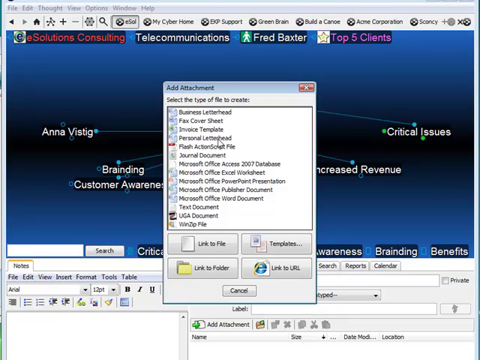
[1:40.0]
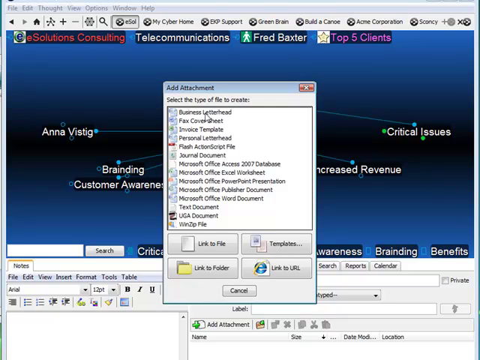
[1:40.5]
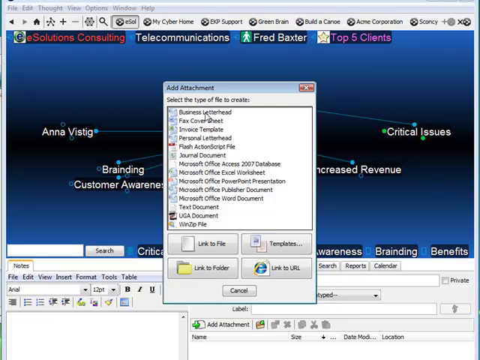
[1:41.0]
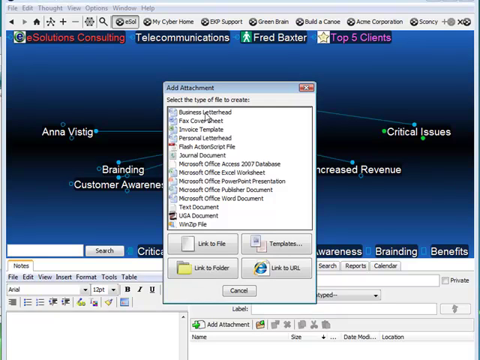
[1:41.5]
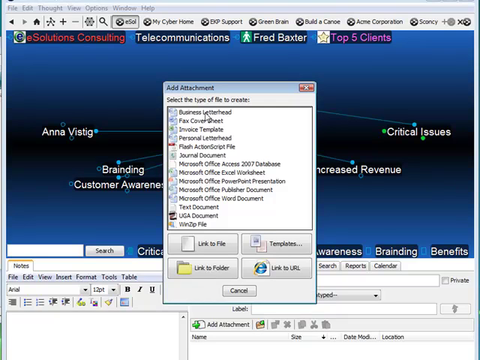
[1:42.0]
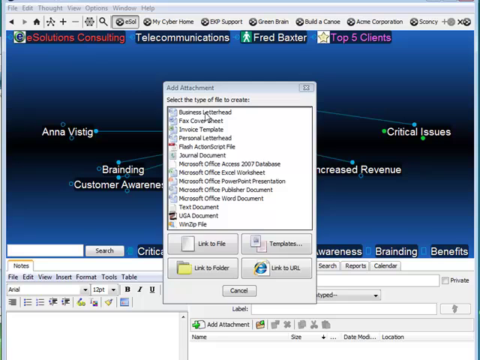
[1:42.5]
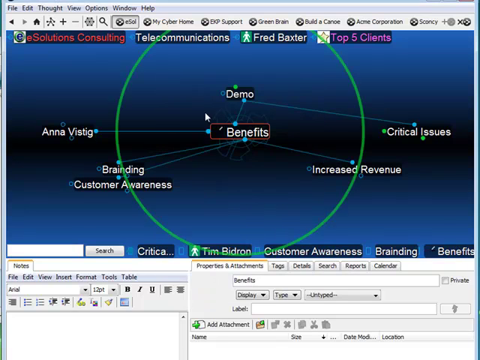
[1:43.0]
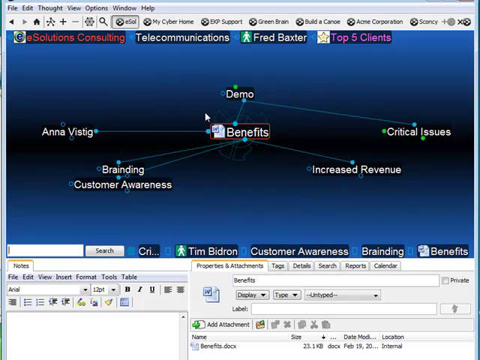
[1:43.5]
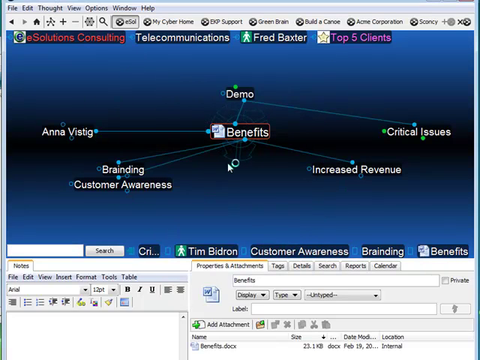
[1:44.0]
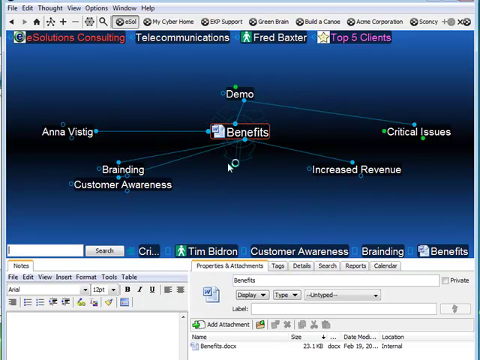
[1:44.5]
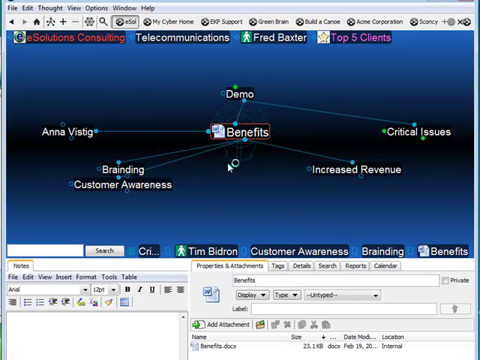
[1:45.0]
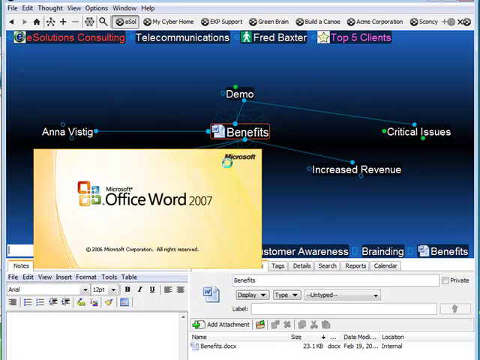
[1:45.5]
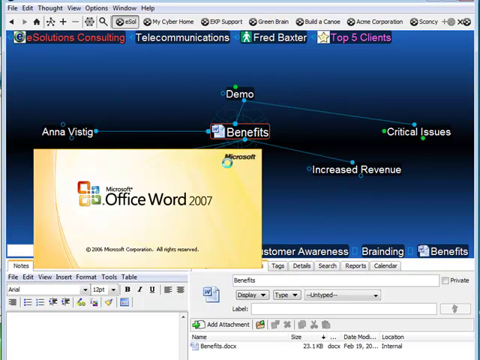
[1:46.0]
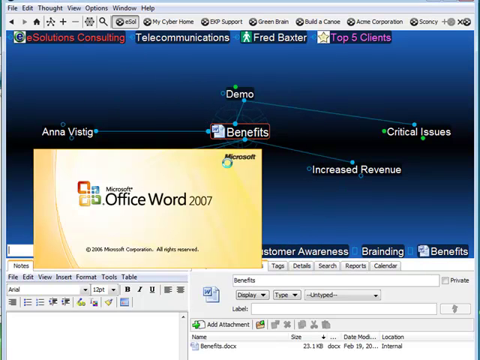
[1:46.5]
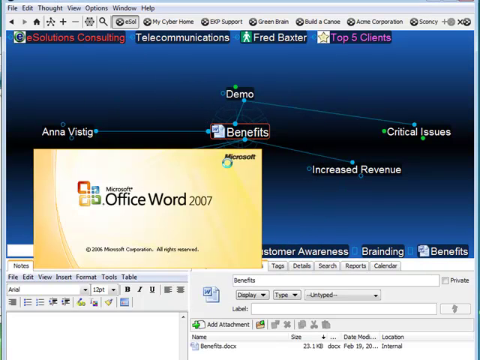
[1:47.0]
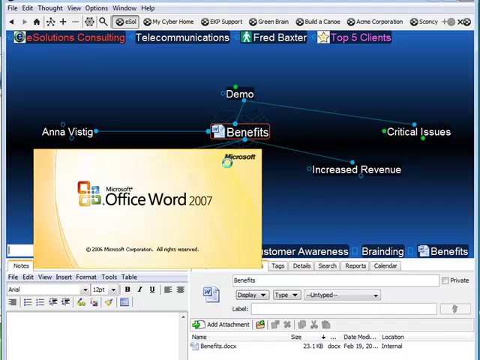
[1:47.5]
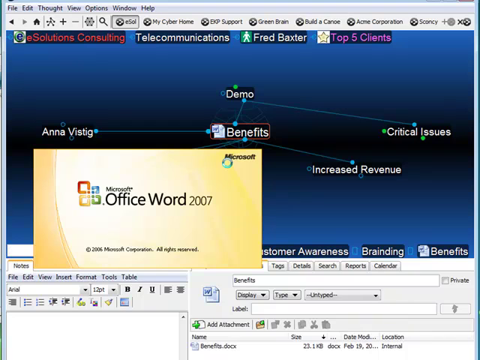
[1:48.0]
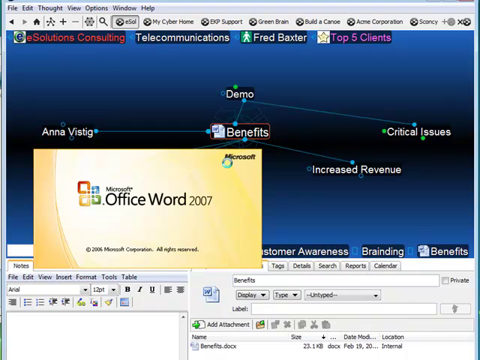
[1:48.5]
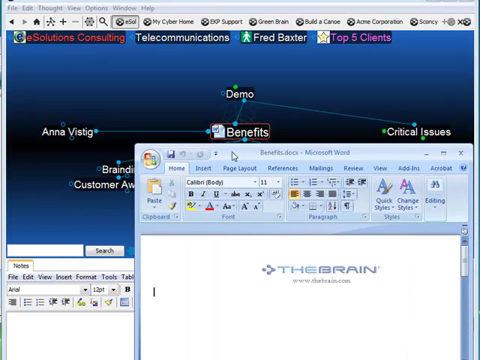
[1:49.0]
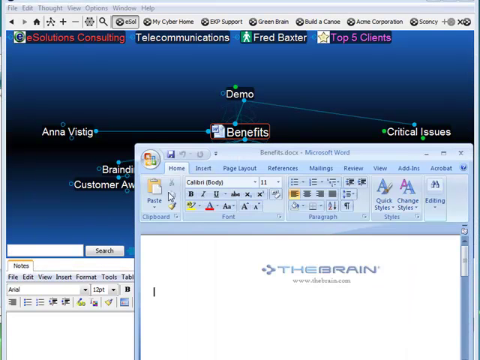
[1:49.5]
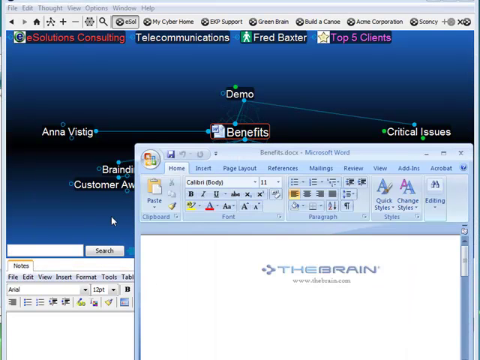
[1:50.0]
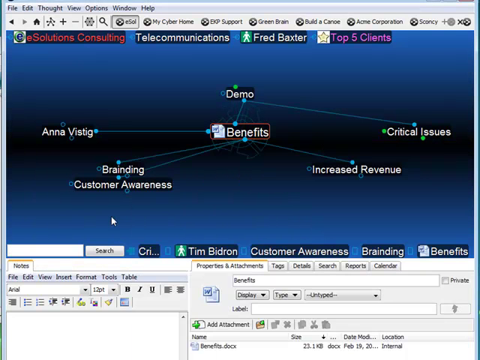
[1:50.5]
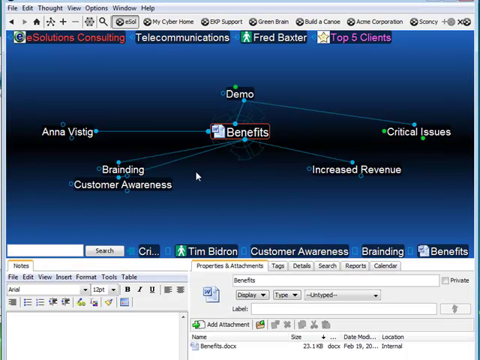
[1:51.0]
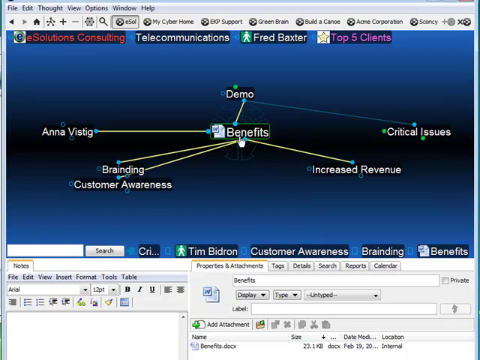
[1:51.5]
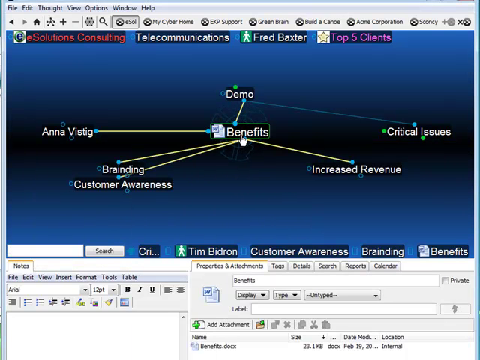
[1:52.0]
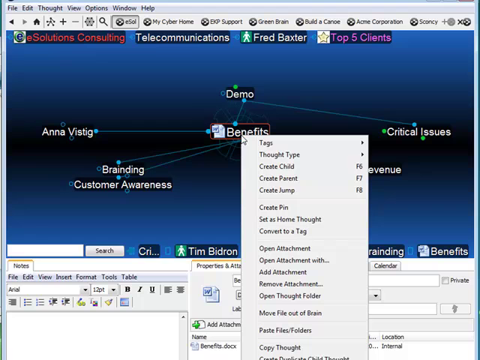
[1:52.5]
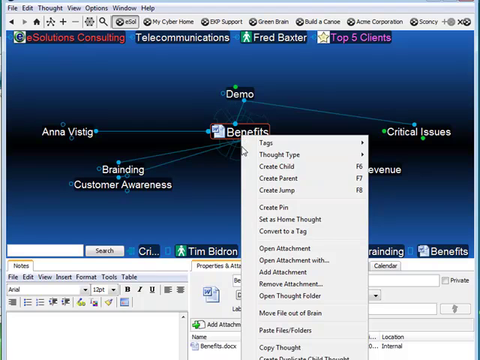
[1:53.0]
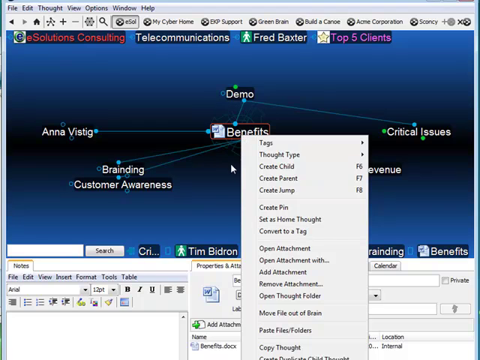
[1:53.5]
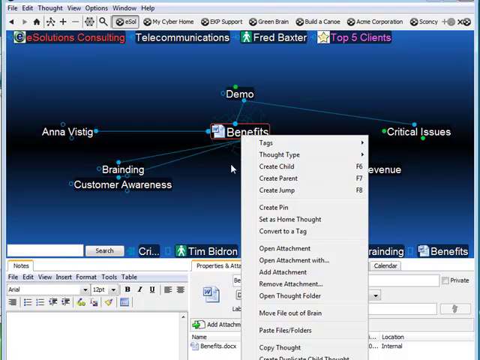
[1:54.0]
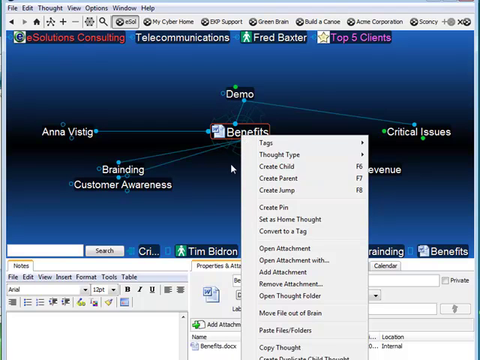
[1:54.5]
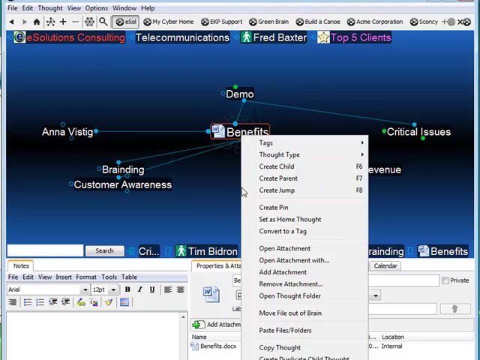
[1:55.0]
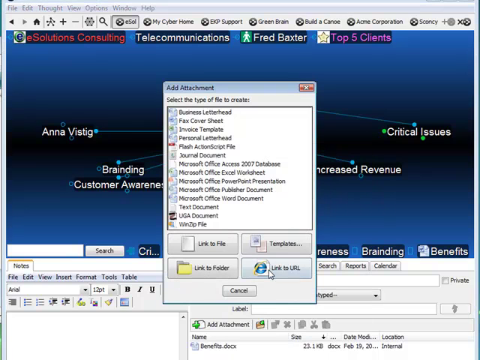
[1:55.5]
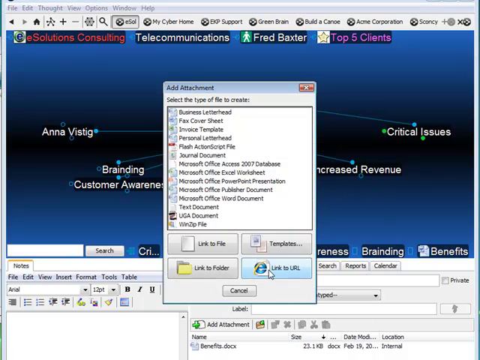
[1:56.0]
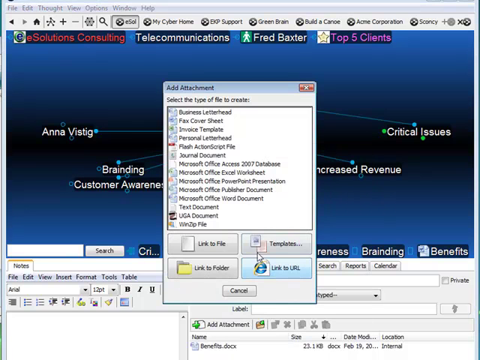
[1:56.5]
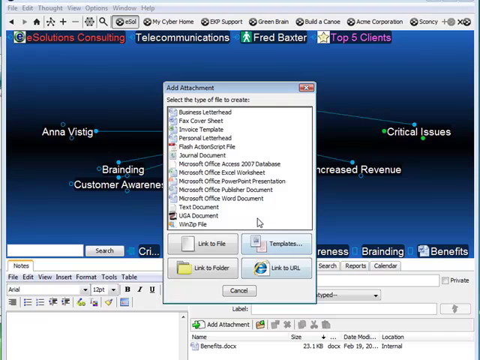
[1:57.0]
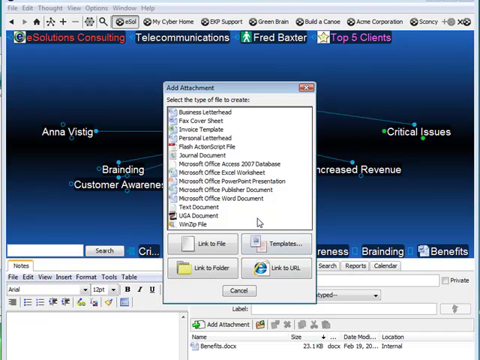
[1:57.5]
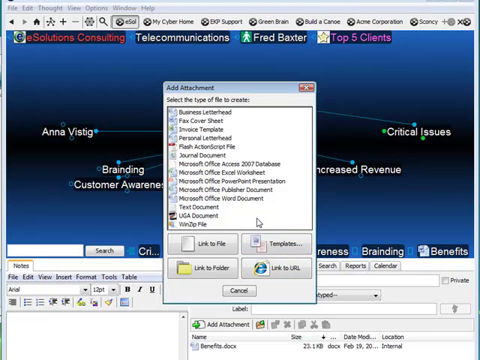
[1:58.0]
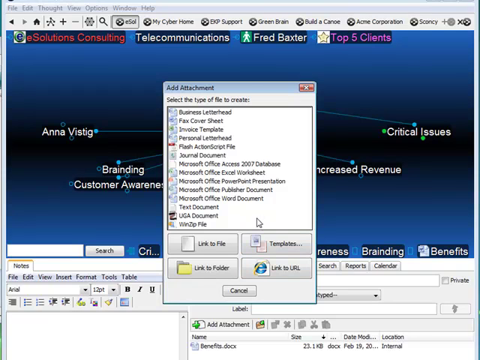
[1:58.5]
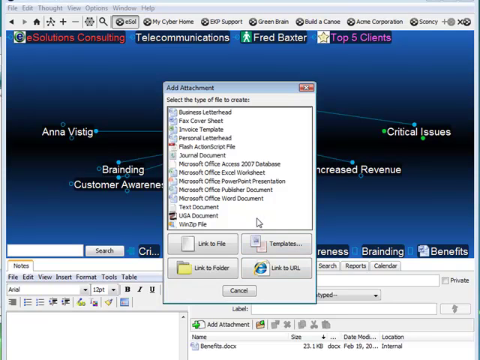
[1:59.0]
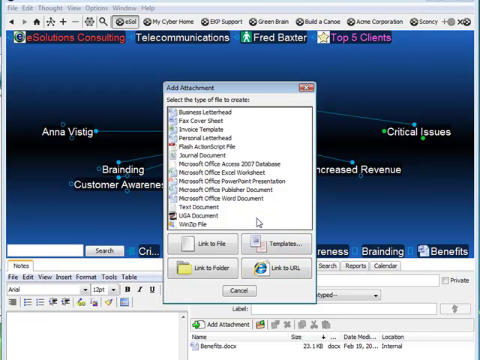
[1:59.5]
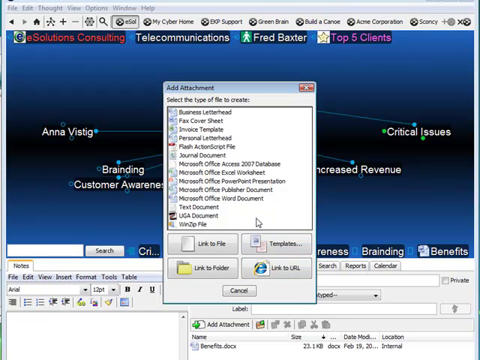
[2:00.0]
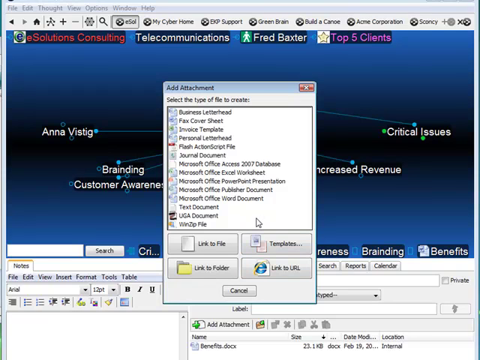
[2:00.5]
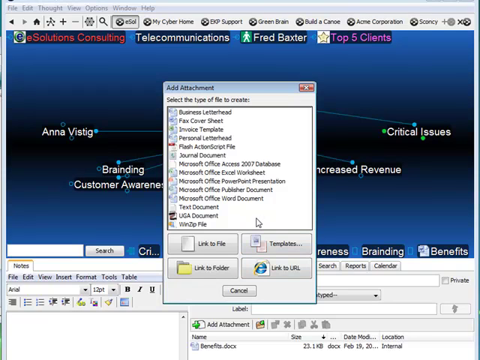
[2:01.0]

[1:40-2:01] He hovers over all the options, then clicks on the business letterhead file, which attaches it to the "benefits" text on the mind map. He clicks on the attached file, and Microsoft Office Word 2007 opens, showing "2004 Microsoft Corporation, all rights reserved." The benefits.docs Word document opens, with "the brain www.thebrain.com" in the header.